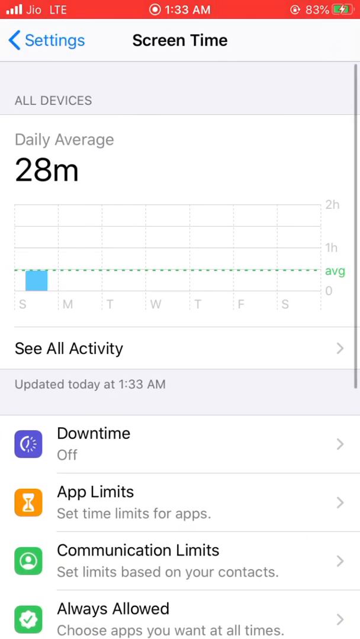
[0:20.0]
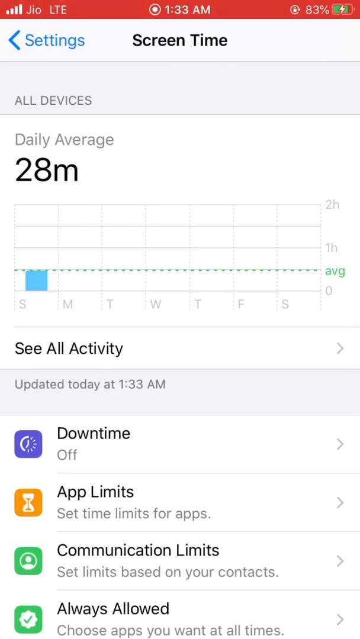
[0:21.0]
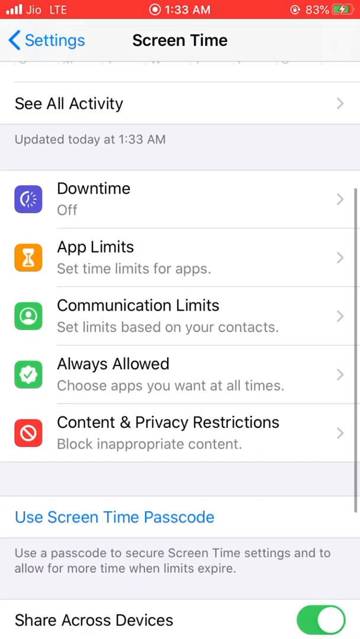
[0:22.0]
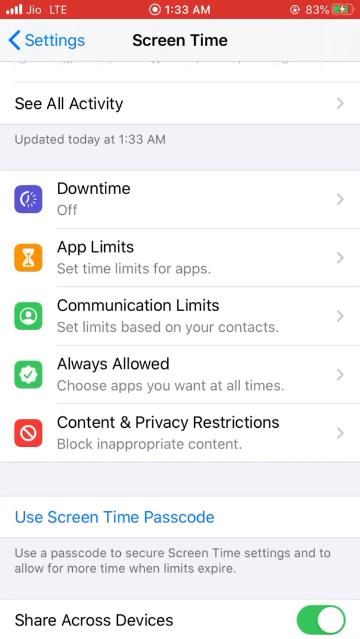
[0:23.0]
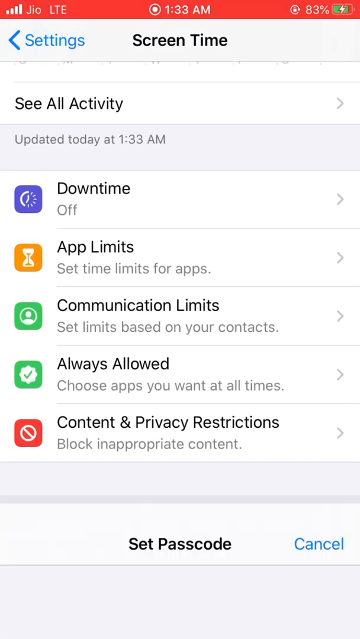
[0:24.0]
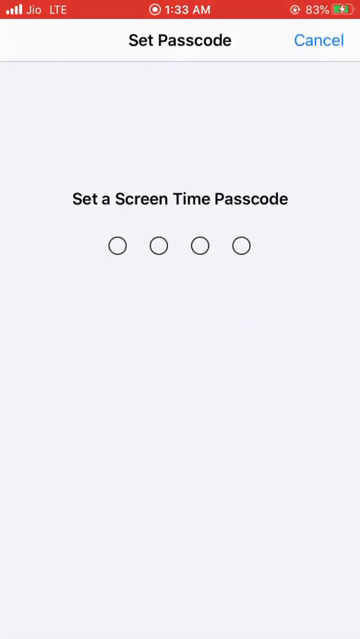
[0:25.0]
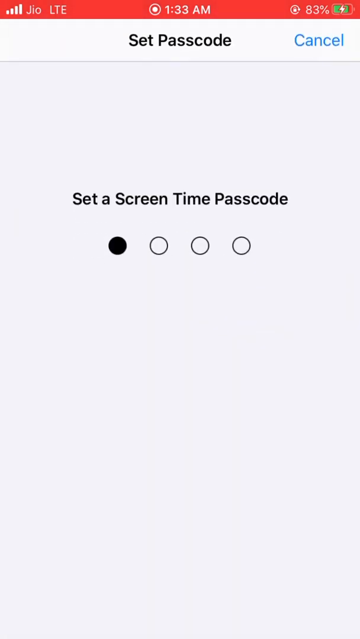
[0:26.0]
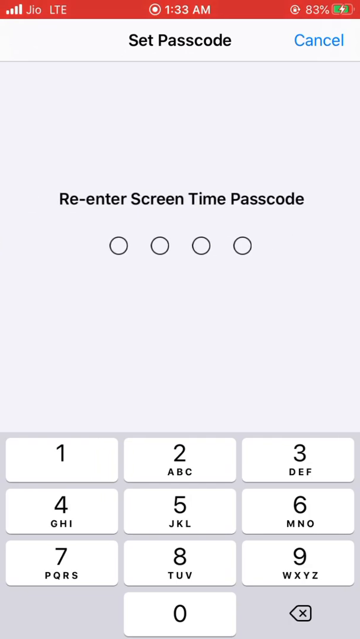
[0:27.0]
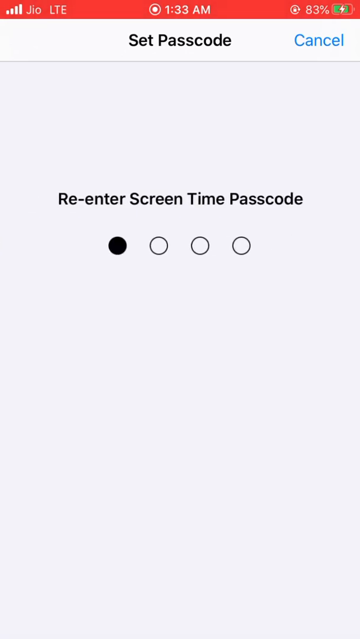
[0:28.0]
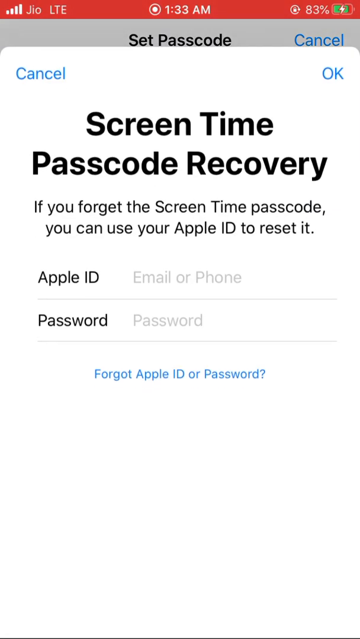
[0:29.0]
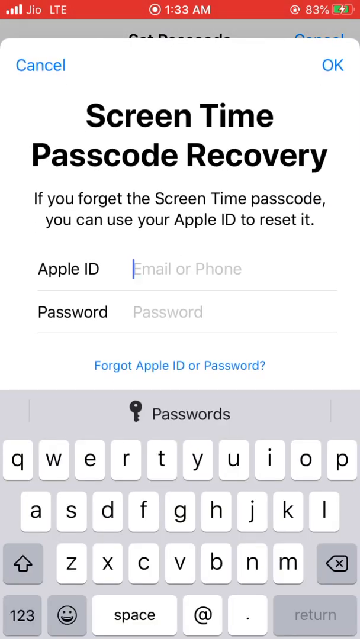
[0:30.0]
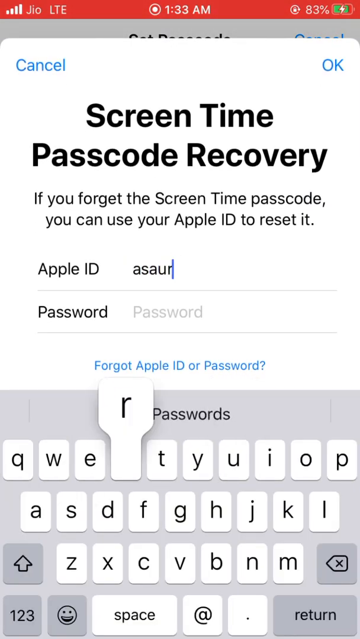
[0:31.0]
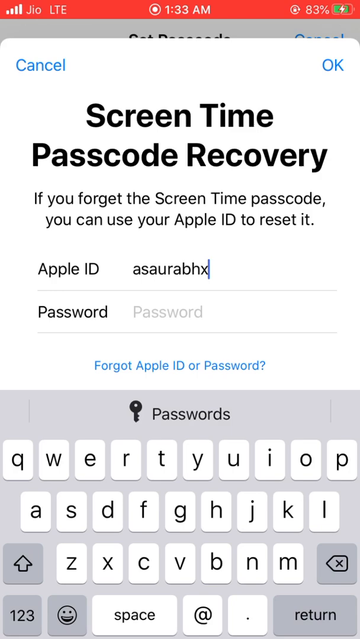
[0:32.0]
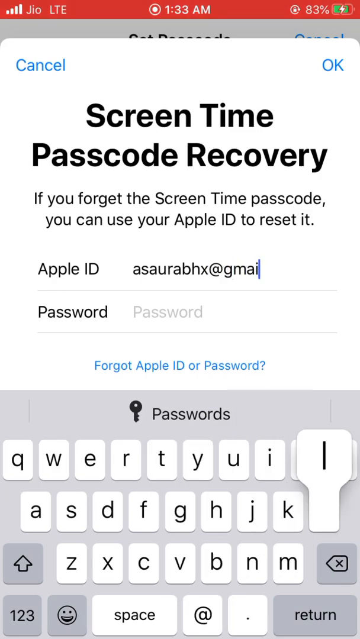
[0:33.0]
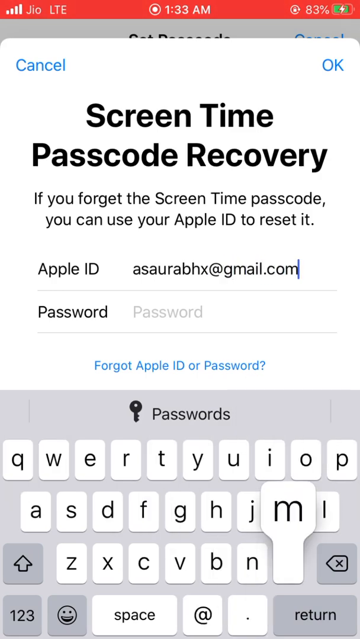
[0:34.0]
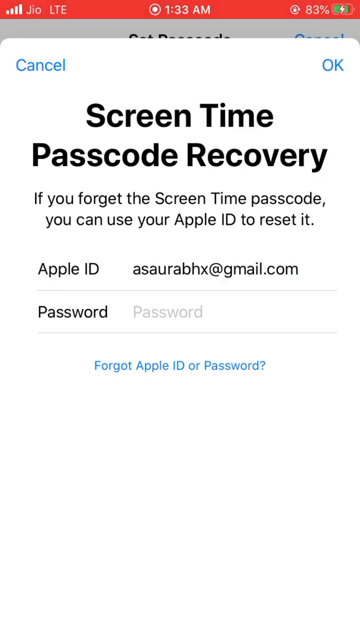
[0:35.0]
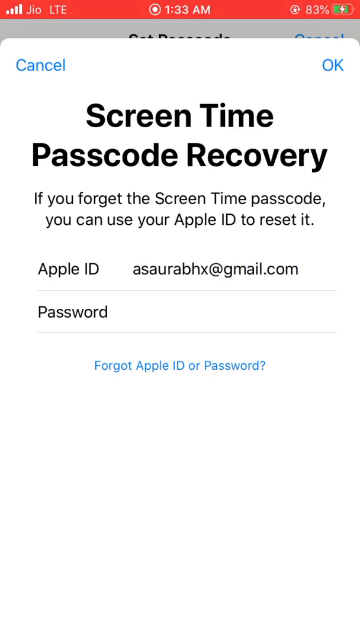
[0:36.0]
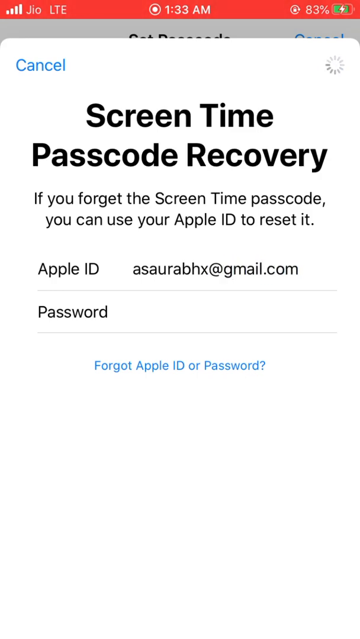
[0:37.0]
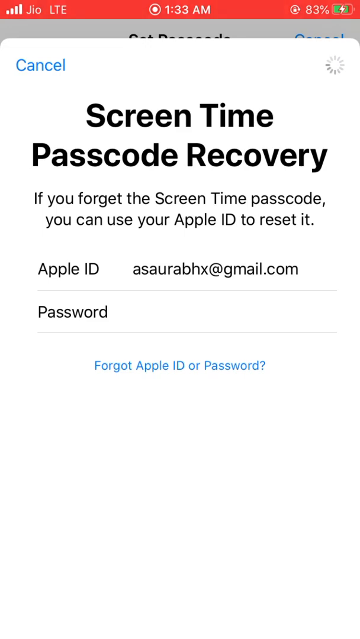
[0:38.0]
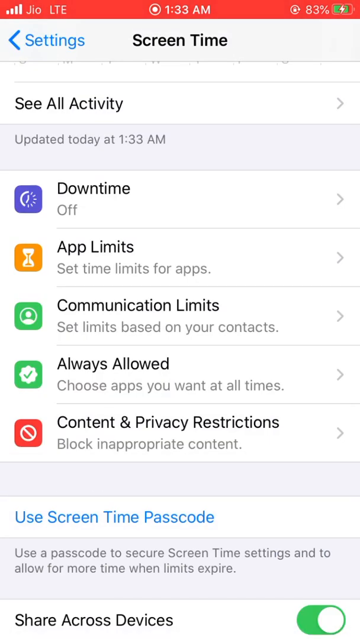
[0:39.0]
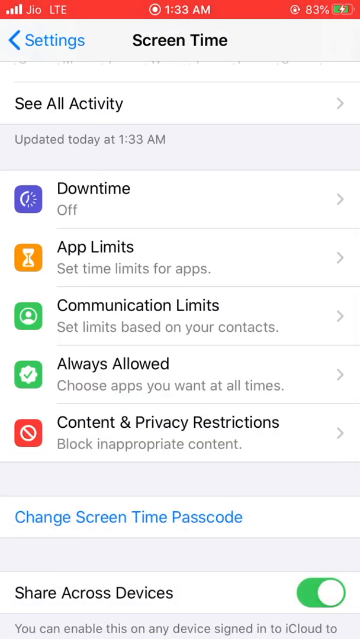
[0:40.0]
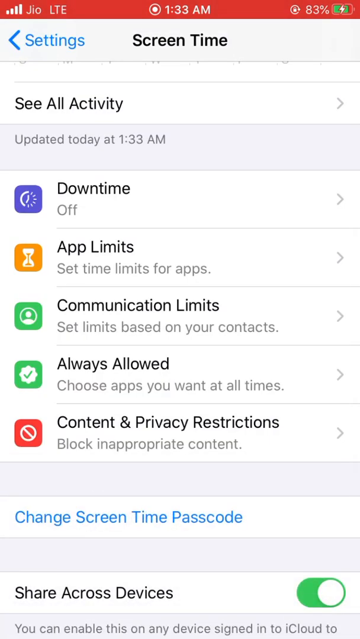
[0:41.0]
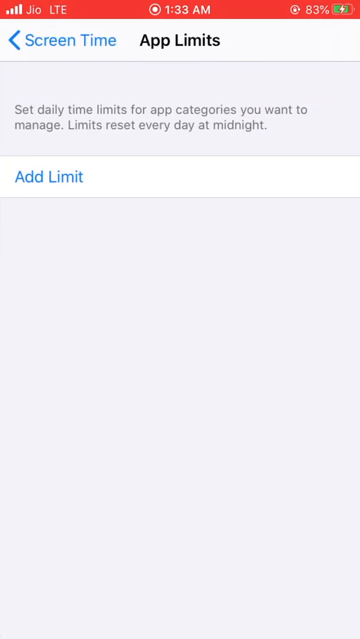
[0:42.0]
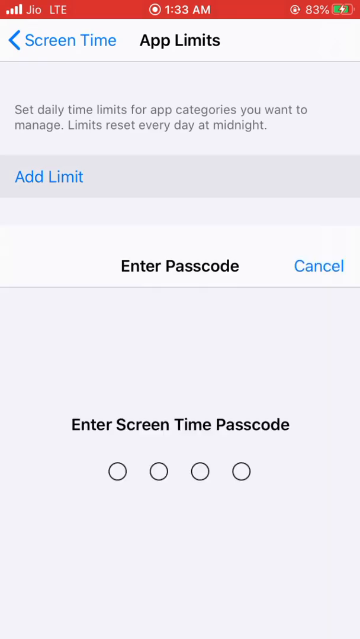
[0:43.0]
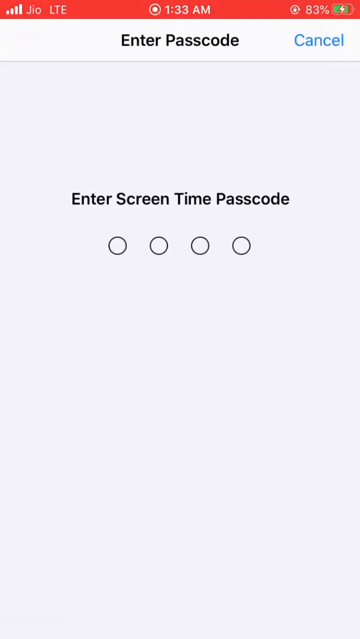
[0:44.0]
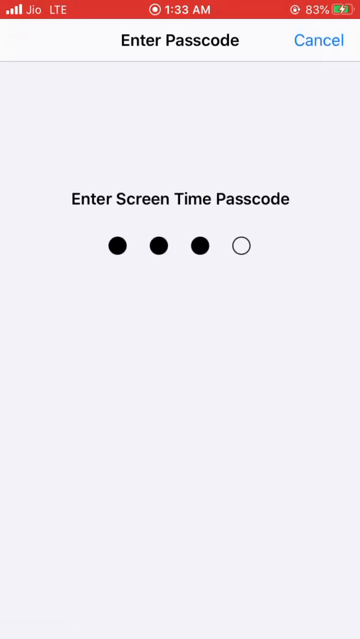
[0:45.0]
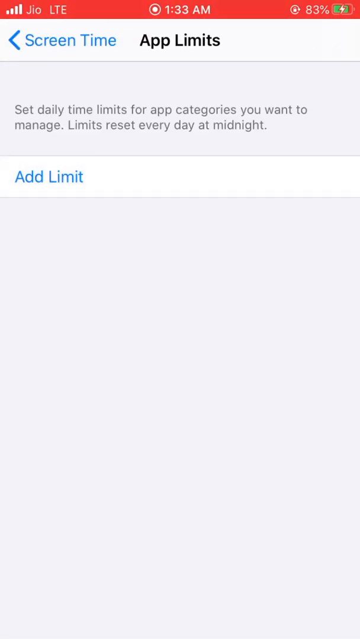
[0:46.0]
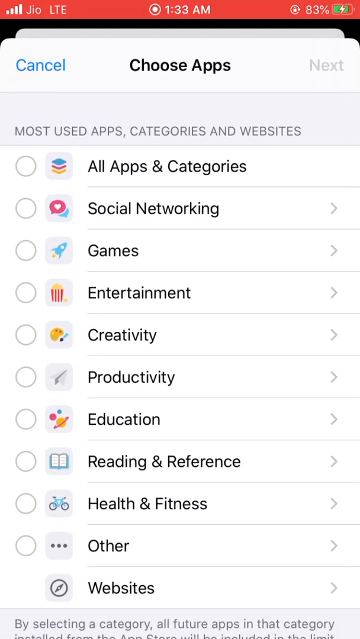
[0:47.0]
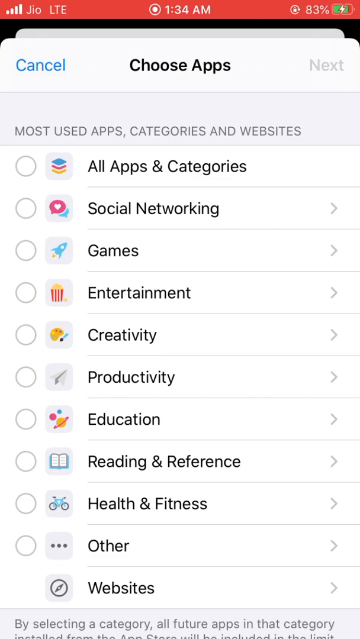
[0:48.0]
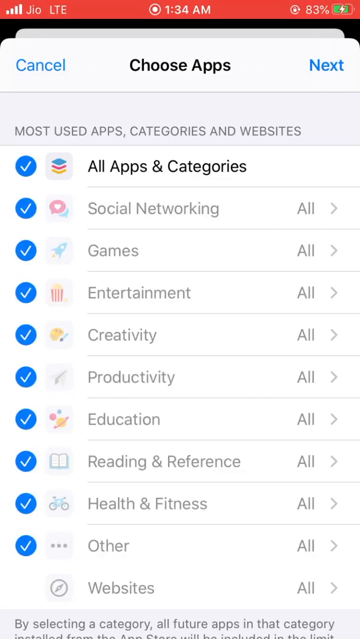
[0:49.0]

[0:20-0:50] The Screen Time page shows a daily average of 28 minutes. Toward the bottom there is a time period, and the activity seems to be from 11 to 12. The activity was updated today at 1.33 AM. Below the daily average are further options: downtime, app limits, communication limits, always allowed, and content privacy restrictions. The user scrolls all the way to the bottom and taps set a screen time passcode, which takes a four-digit code. They enter a number that is not shown. A screen titled "screen time passcode recovery" then appears, asking for an Apple ID and password; the user types in the Apple ID asaurabhx@gmail.com but does not enter a password. They go back to the activity screen, choose to add a limit, and move on to choosing apps, apparently selecting all of the apps and categories with a button.